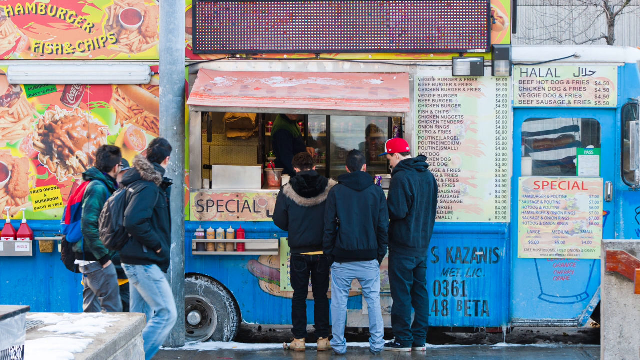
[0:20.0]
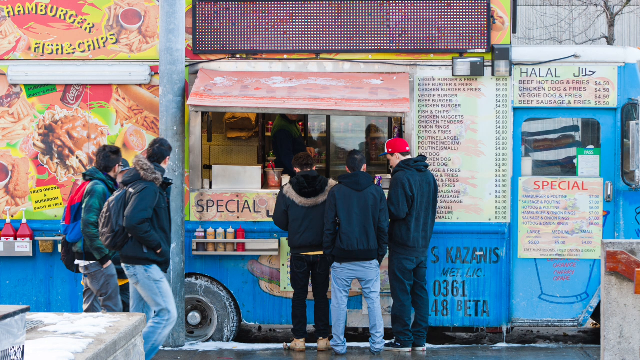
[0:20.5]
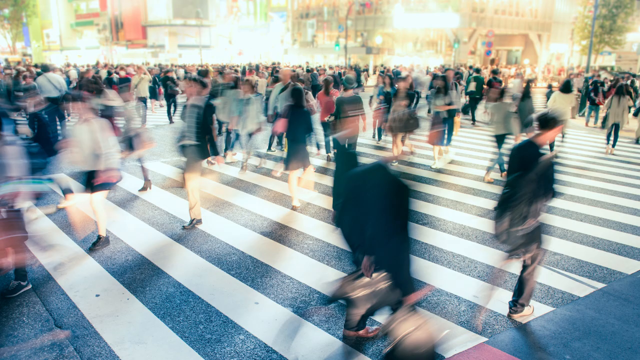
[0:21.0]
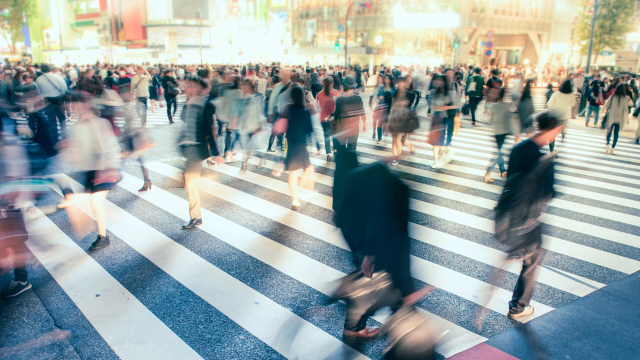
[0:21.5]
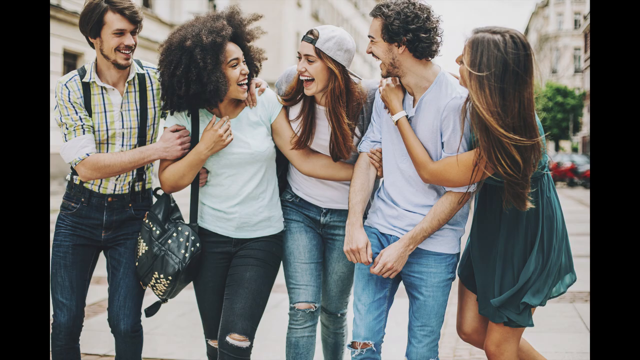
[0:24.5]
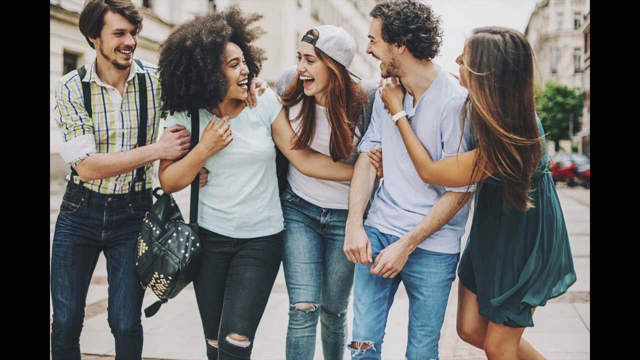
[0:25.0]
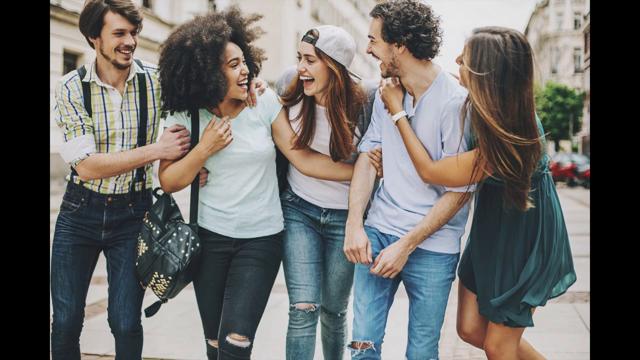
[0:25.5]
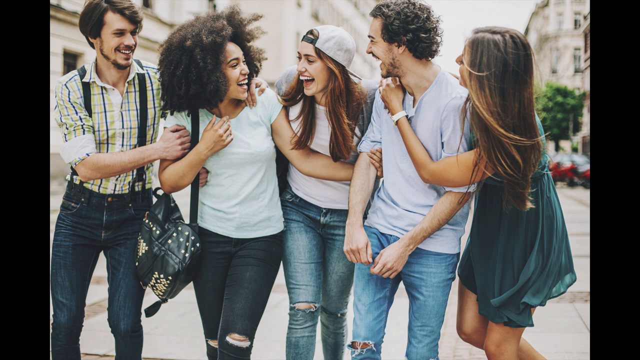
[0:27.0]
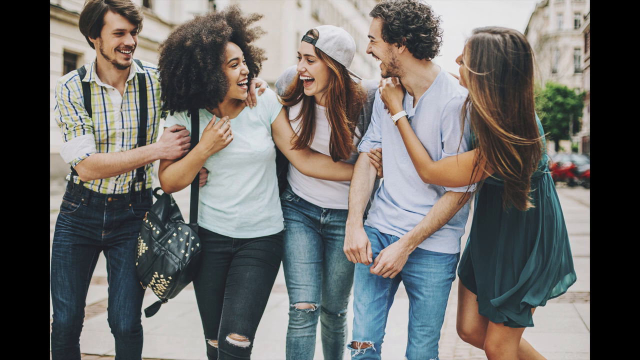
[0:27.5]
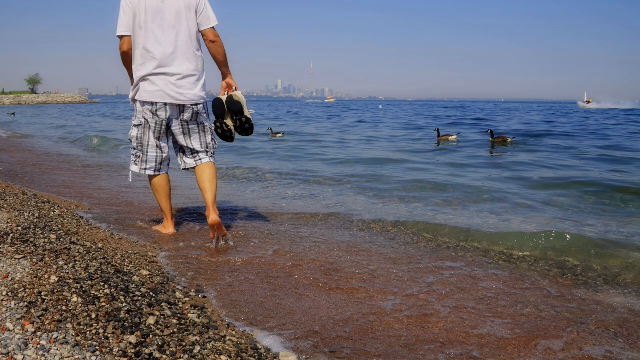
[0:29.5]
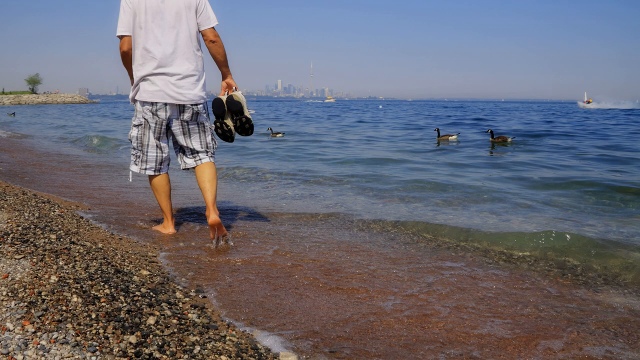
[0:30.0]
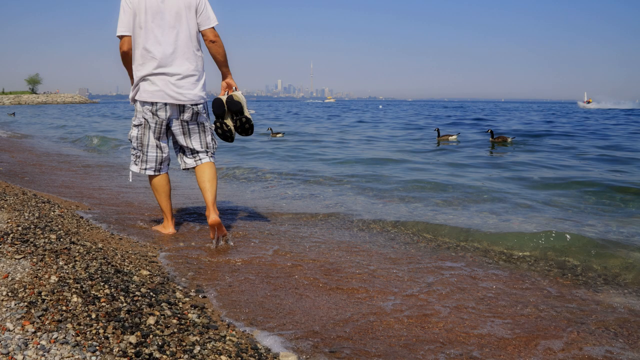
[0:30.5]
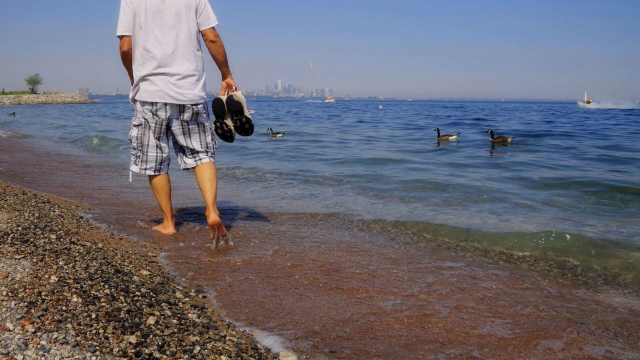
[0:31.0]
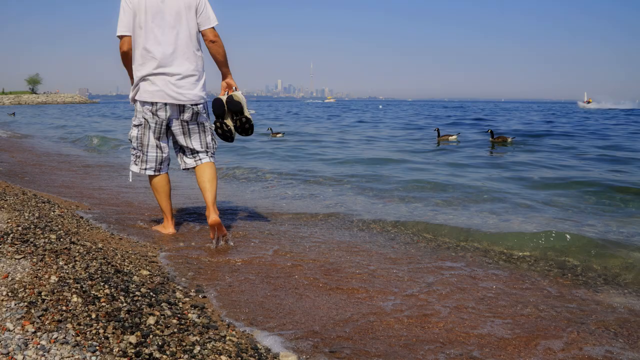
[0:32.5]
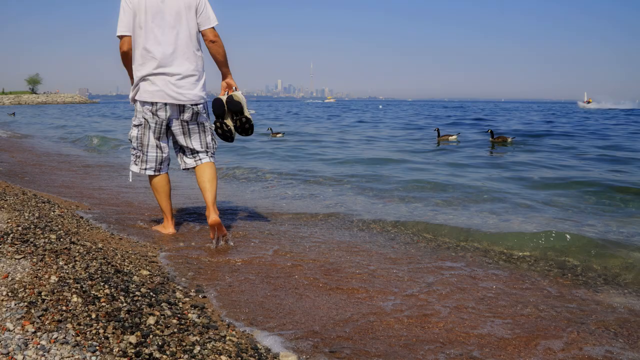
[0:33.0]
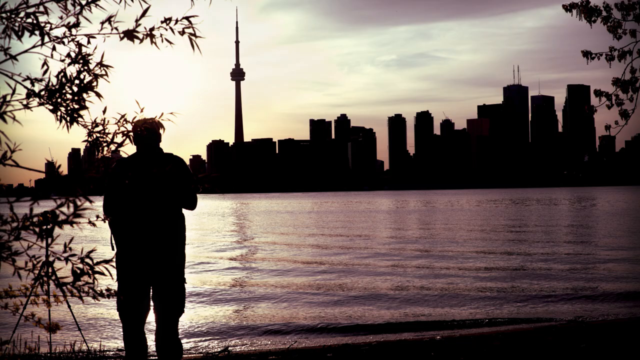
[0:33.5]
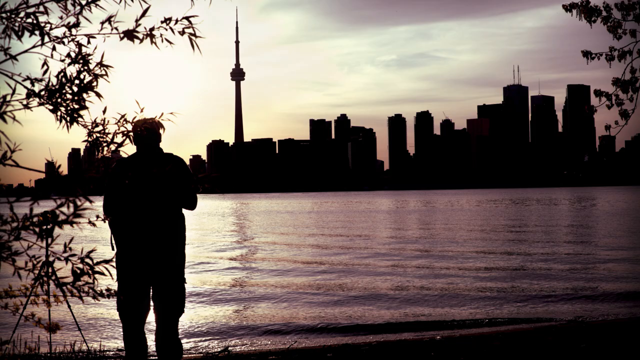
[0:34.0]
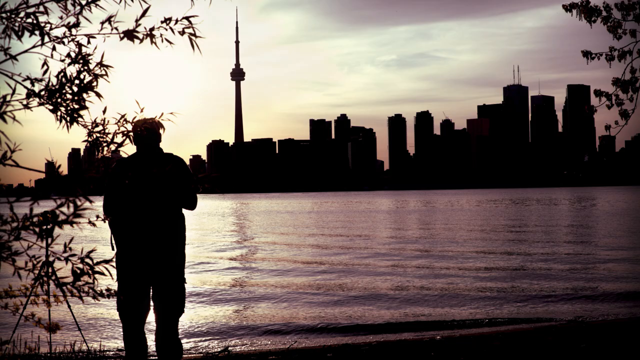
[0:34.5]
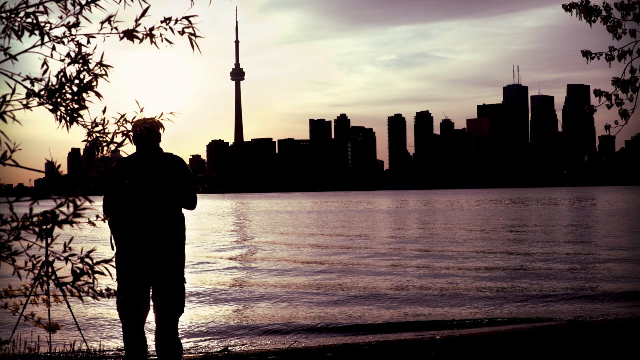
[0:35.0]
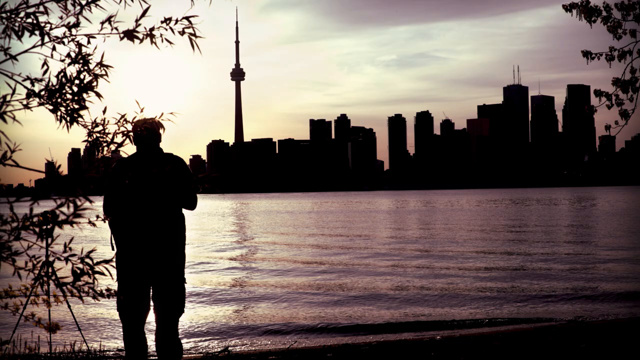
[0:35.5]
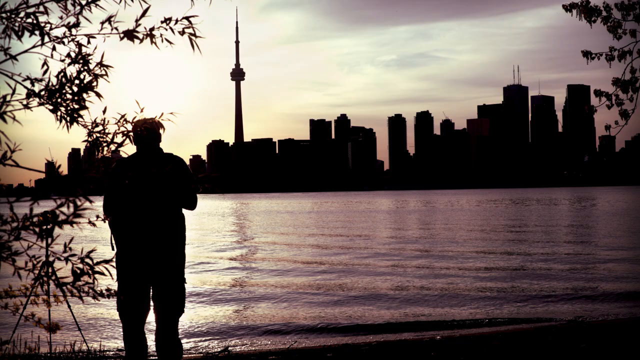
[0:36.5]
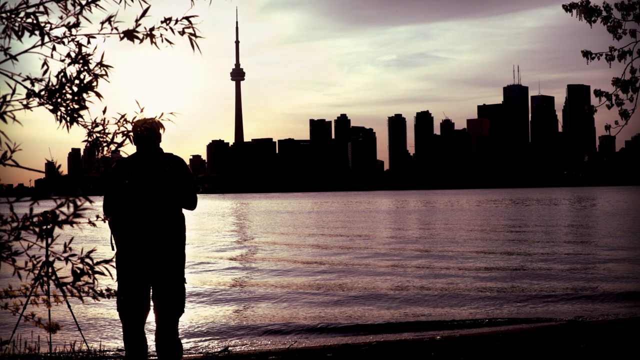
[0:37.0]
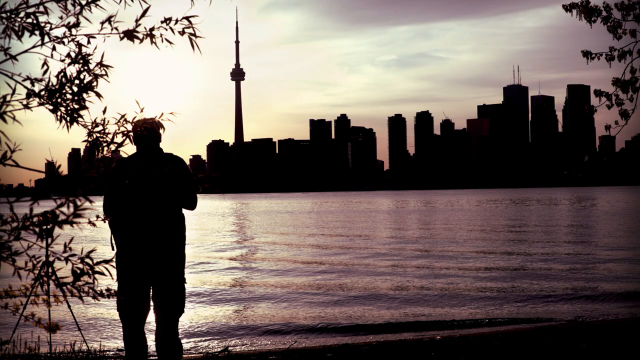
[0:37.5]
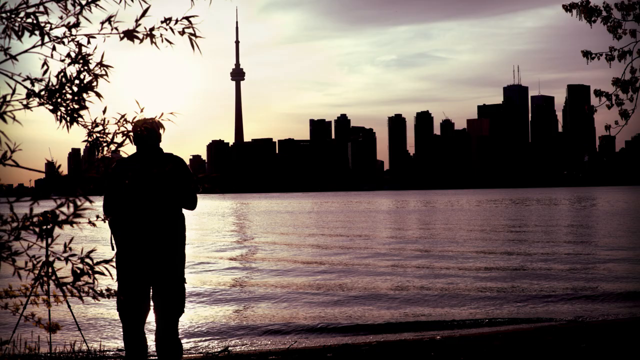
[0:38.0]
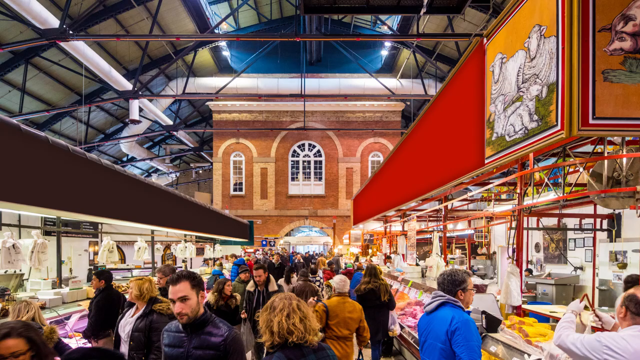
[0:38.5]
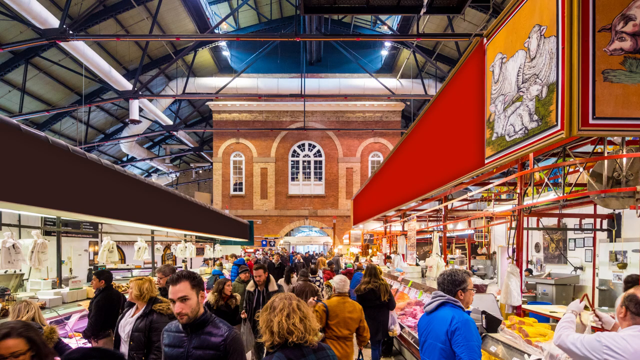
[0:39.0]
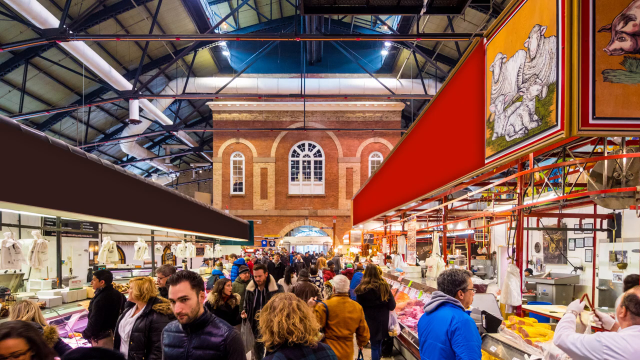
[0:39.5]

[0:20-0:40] A group of people is by a food shop. They are all wearing winter jackets; some are carrying bags and one has a red hat on. The food shop has a menu inscribed on the wall, with items such as "halal" and "special." The video transitions to a fast frame of lots of people walking on the pedestrian walk. Next, a group of three women and two men are all smiles as they hold one another; one of the men is wearing suspenders on a shirt and a pair of jeans. A man walks barefoot by the river, wearing shorts and holding a pair of sneakers, while a dog swims in the river. The silhouette of the CN Tower and skyscrapers is visible in the distance. Then there is a frame of people shopping inside a shop.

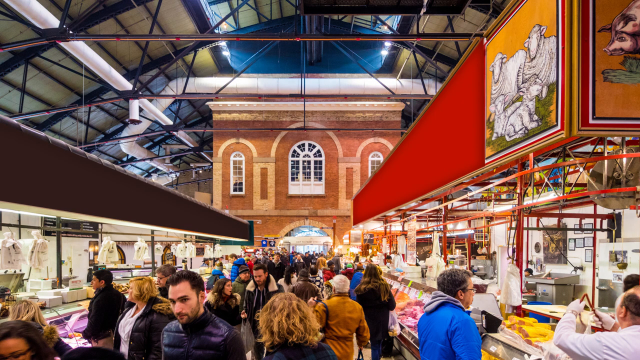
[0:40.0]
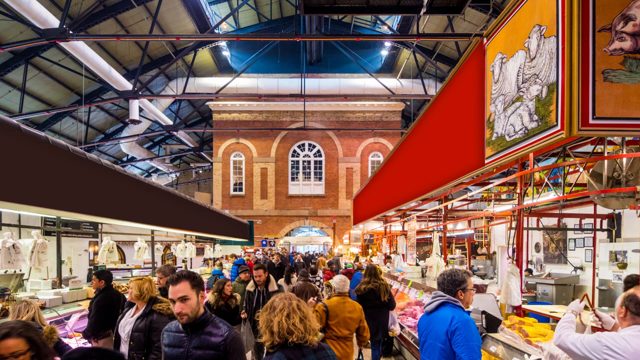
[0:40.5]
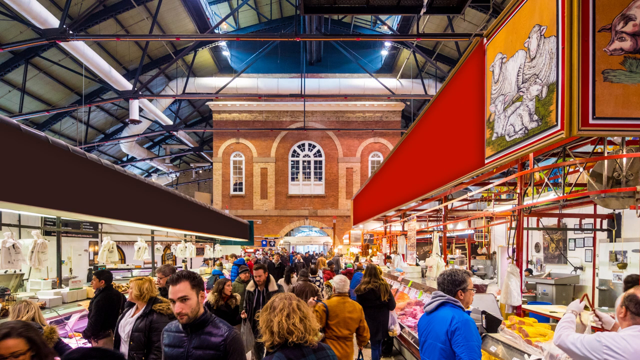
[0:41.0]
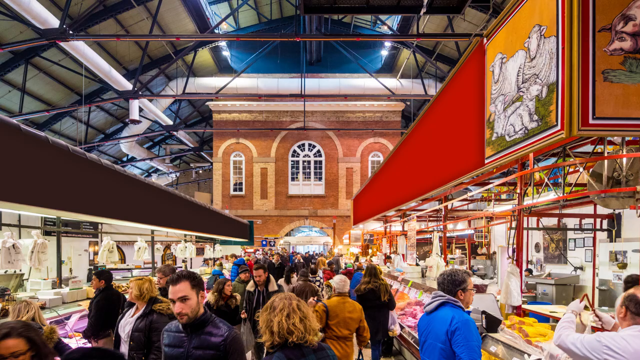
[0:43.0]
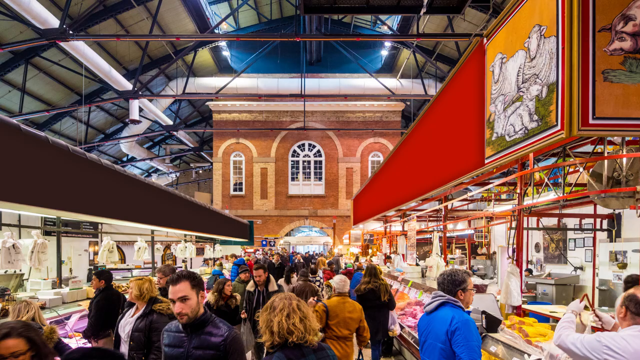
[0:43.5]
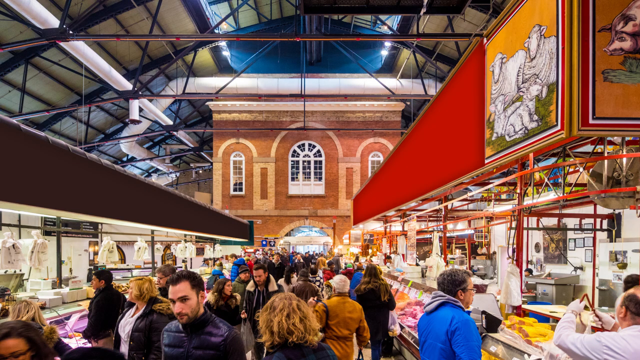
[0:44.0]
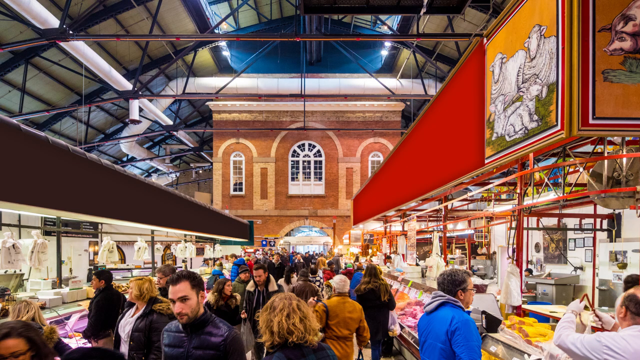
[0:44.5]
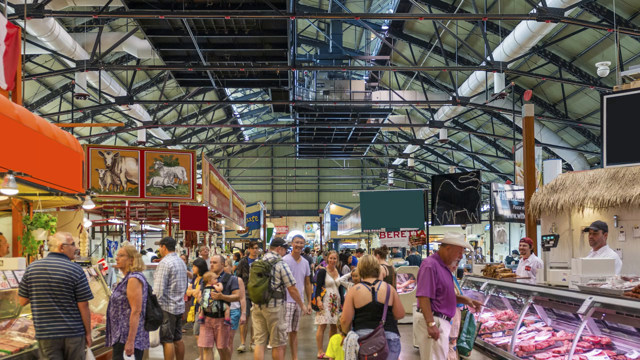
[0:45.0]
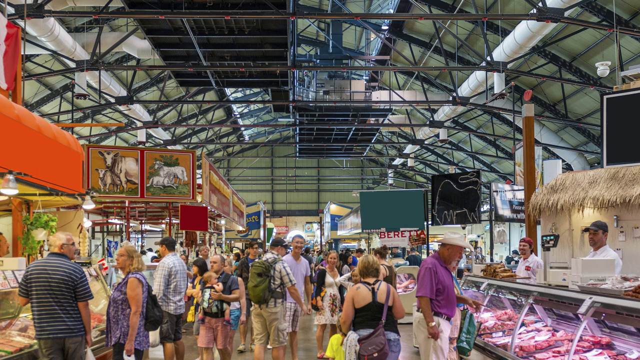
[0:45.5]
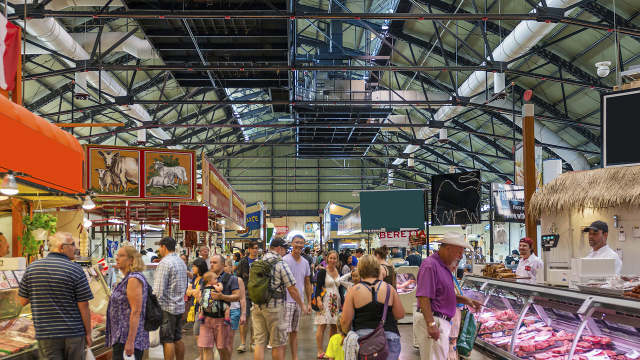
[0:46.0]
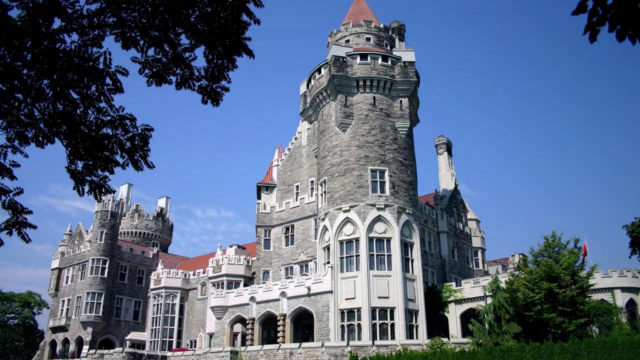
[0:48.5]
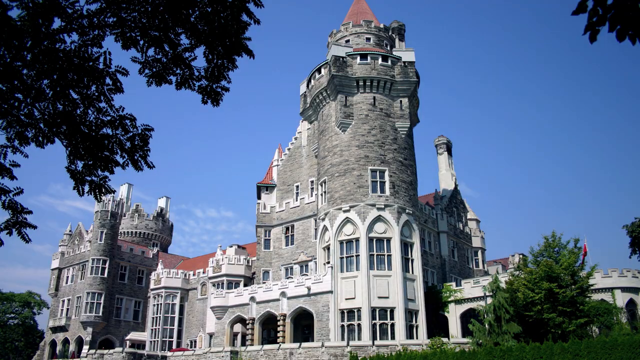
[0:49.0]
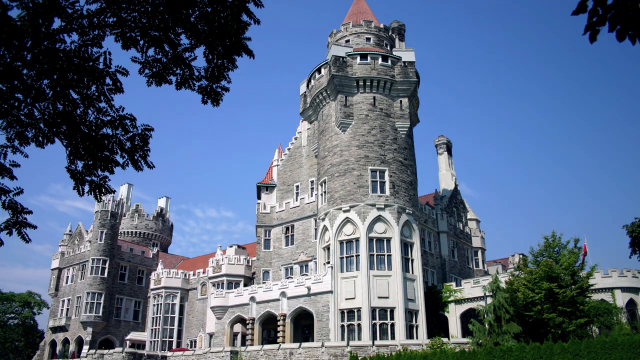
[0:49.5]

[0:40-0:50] Lots of people are shopping inside a building. A frame shows a building that is green with a touch of white and has a brown roof. Among the many shoppers is a grey-haired man wearing a black-and-white horizontally striped T-shirt, and another man wearing a white hat and a purple shirt, looking at the see-through glass of a deli. One frame shows a banner that is orange with a touch of red, and in the orange frame there are four sheep, all seated. In another frame, at the top of the stand, there is a picture of a pig.